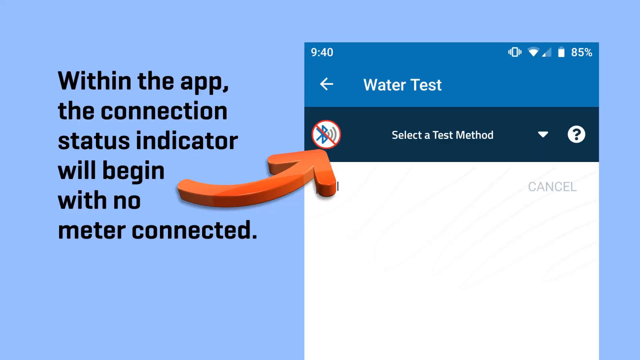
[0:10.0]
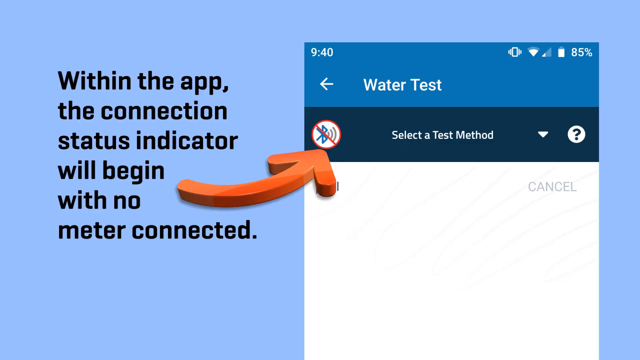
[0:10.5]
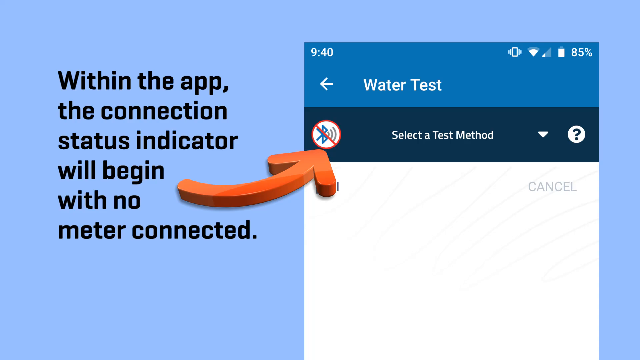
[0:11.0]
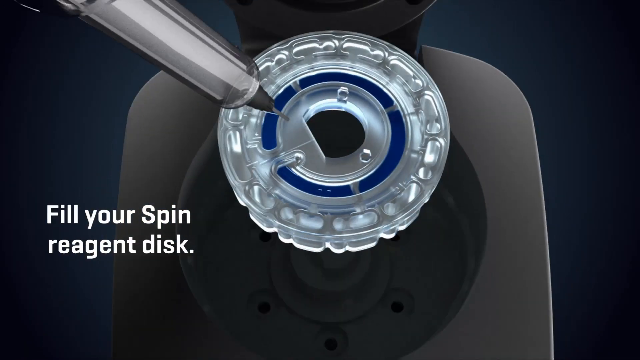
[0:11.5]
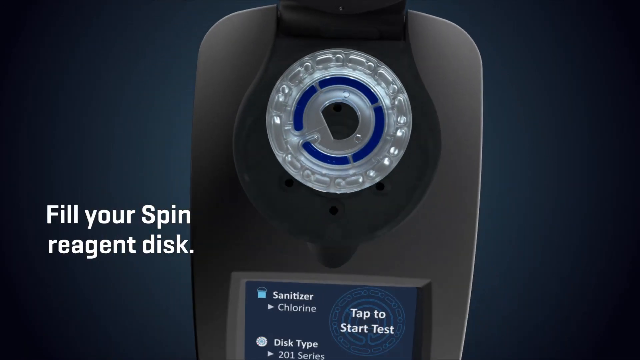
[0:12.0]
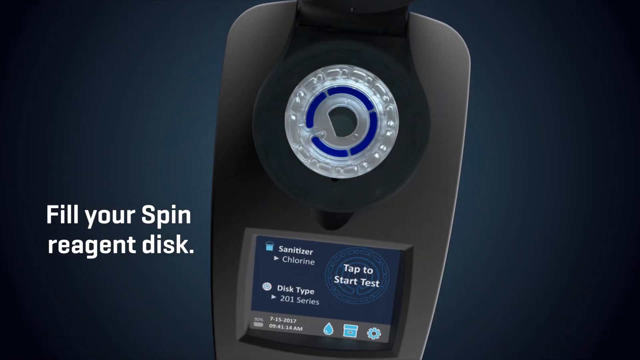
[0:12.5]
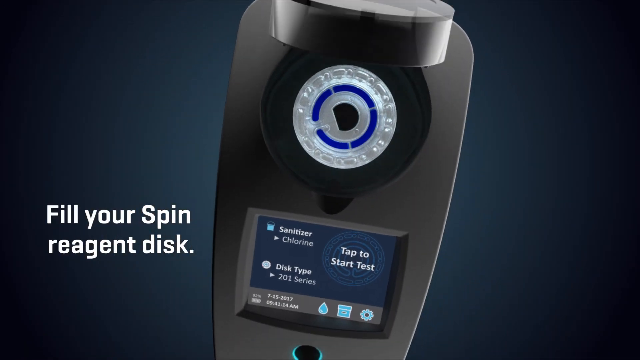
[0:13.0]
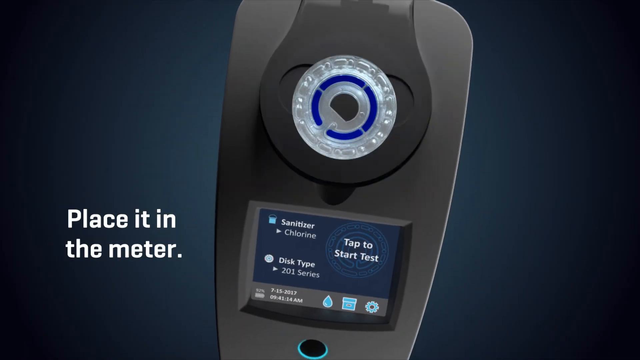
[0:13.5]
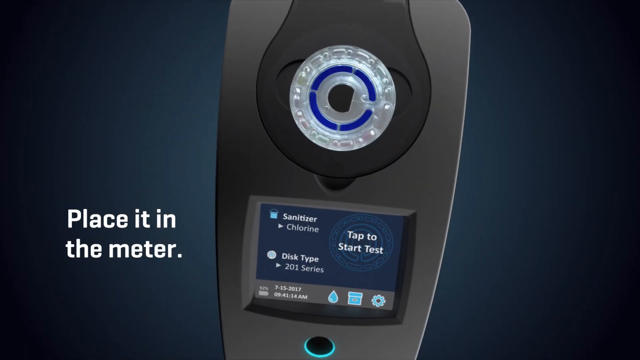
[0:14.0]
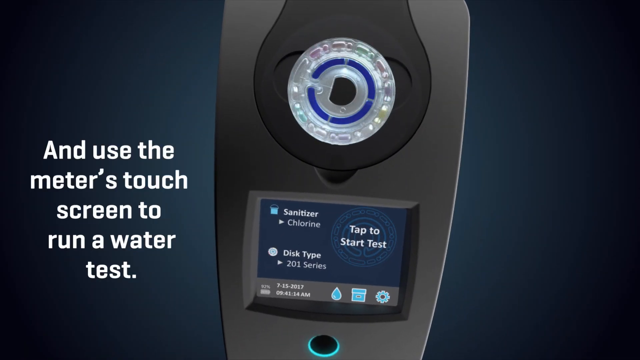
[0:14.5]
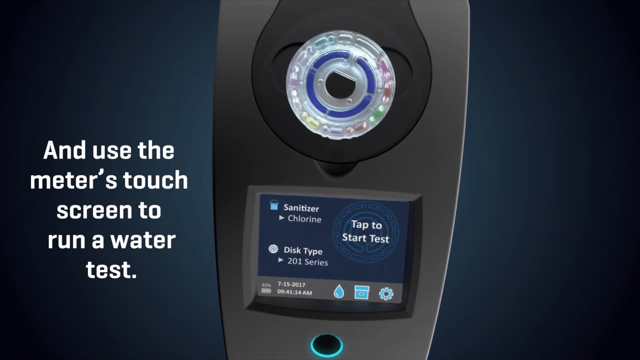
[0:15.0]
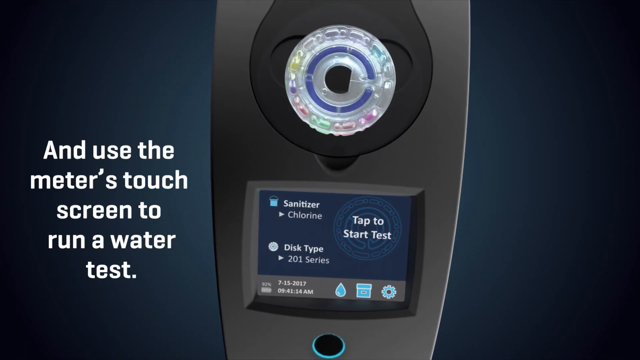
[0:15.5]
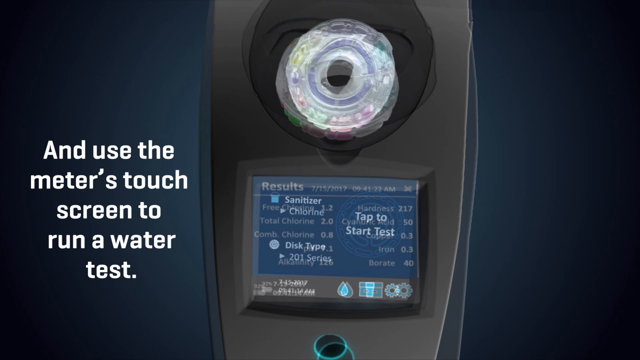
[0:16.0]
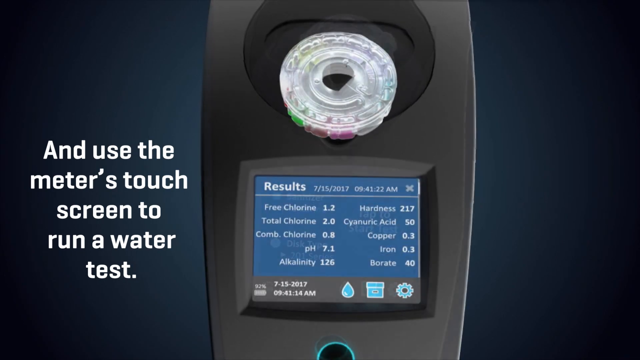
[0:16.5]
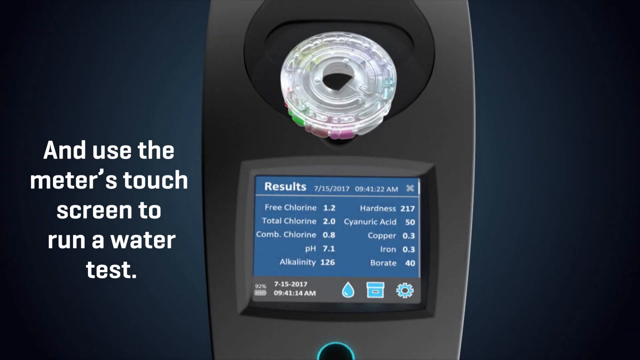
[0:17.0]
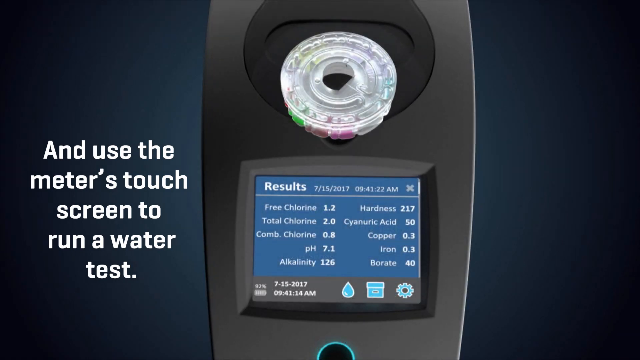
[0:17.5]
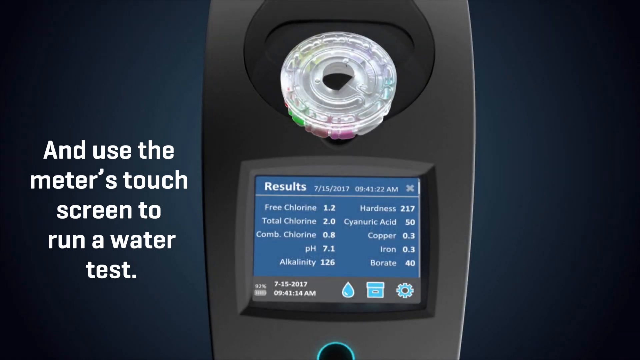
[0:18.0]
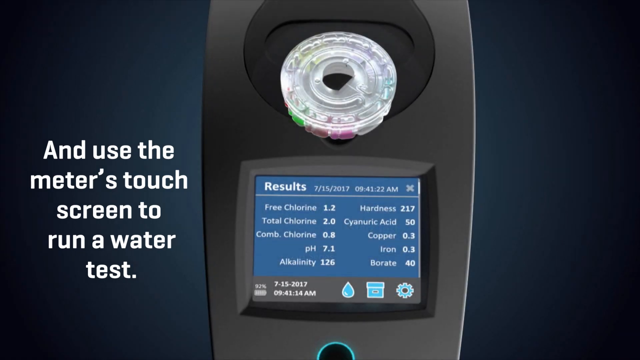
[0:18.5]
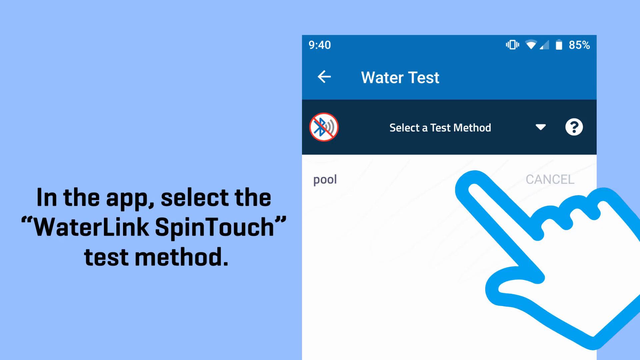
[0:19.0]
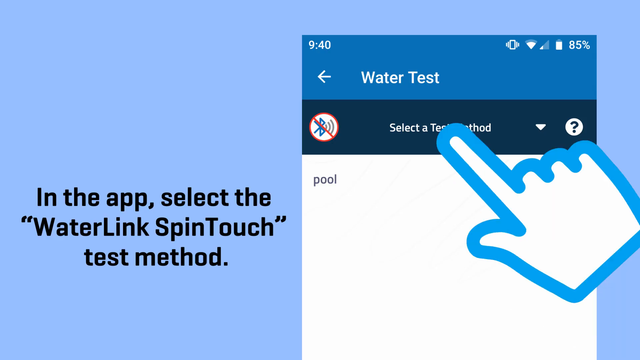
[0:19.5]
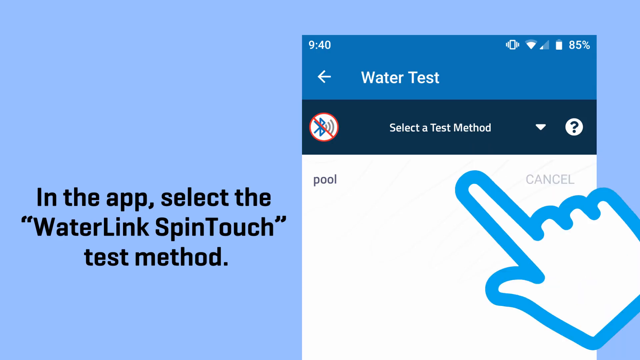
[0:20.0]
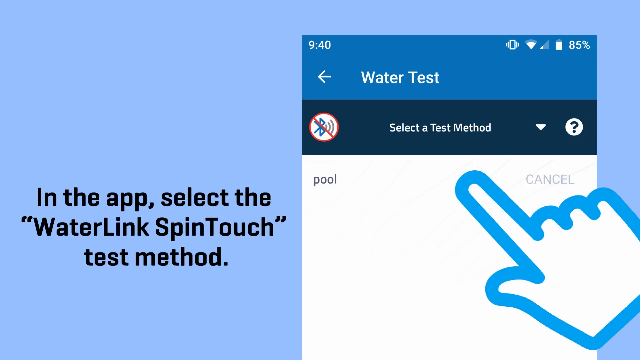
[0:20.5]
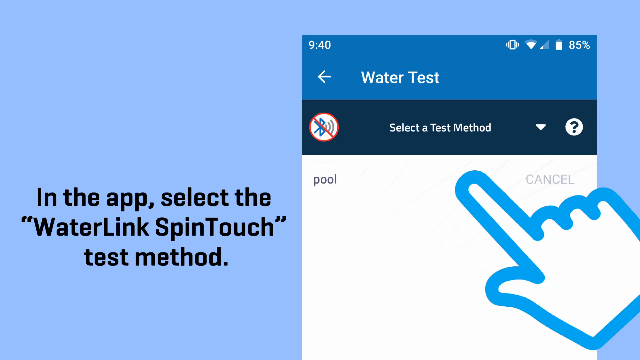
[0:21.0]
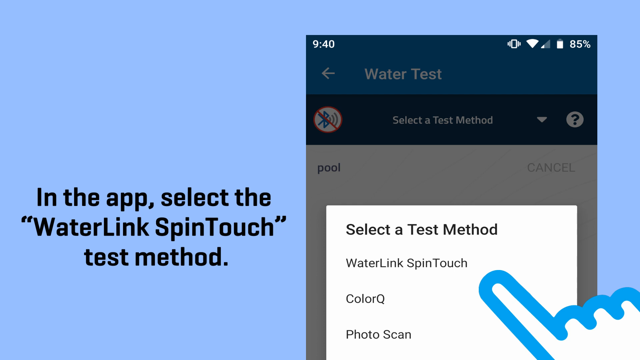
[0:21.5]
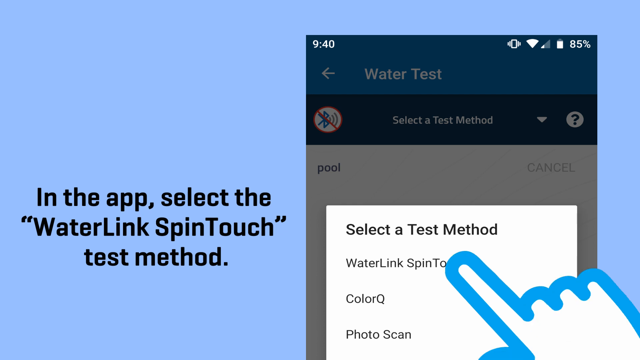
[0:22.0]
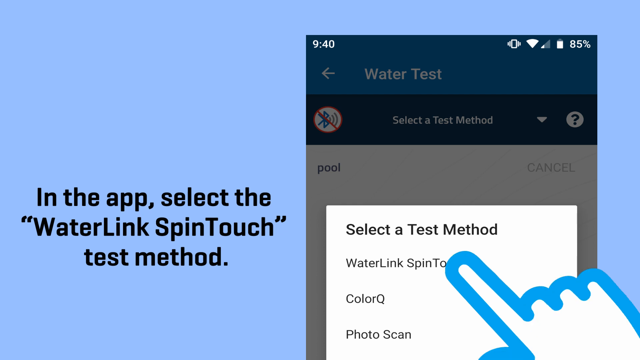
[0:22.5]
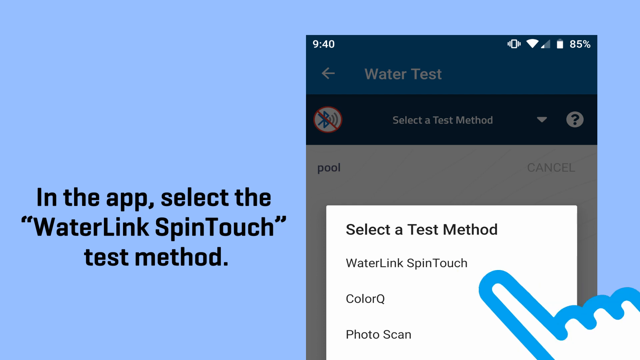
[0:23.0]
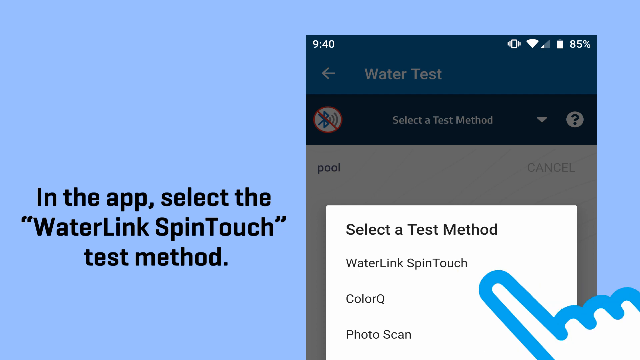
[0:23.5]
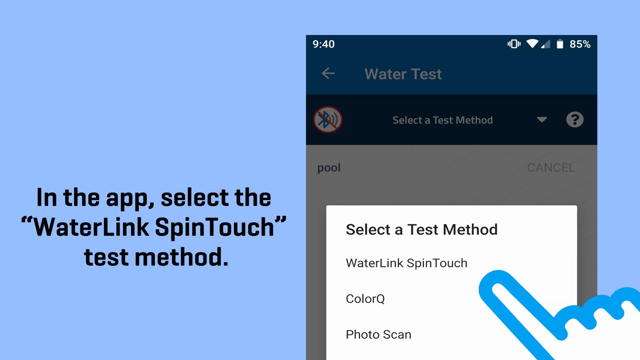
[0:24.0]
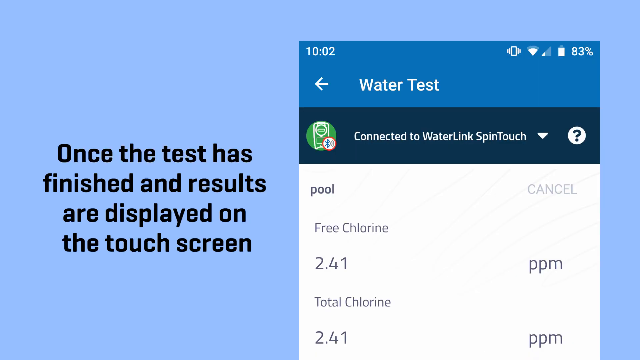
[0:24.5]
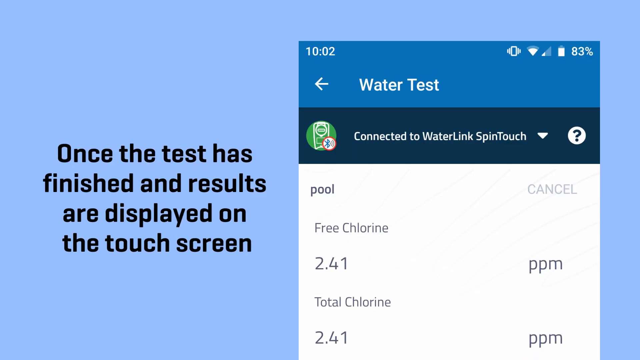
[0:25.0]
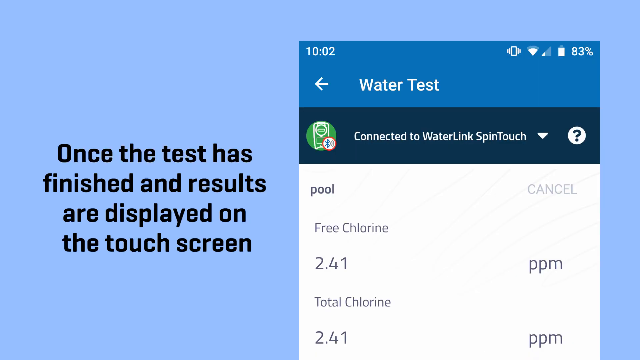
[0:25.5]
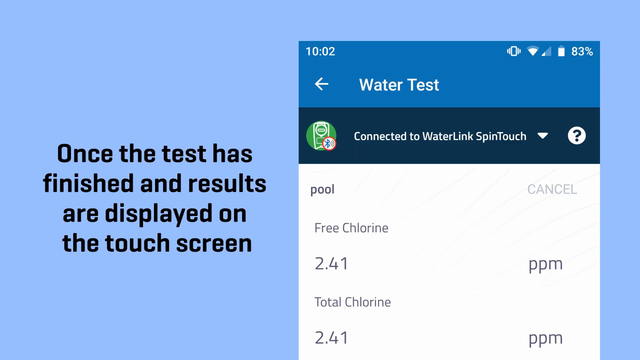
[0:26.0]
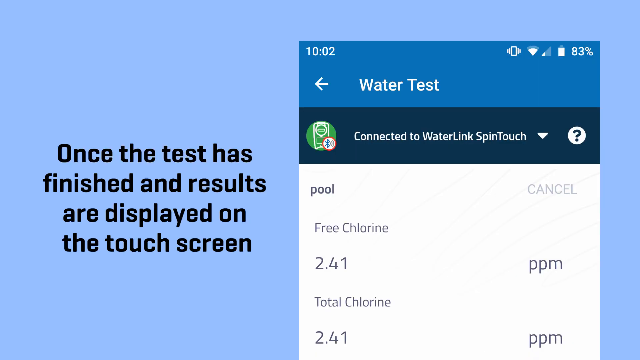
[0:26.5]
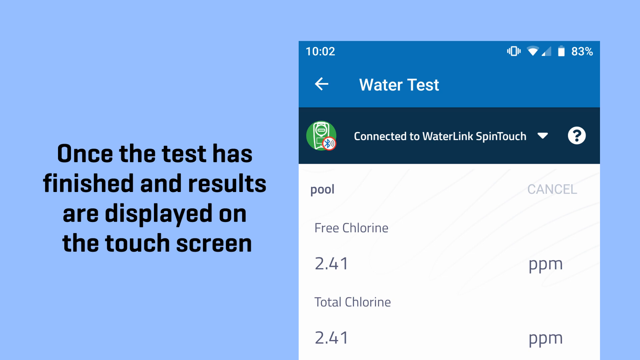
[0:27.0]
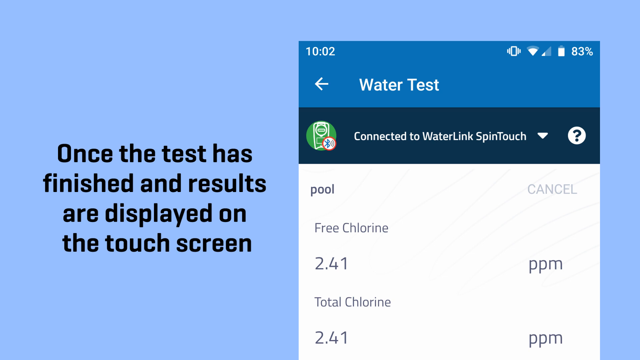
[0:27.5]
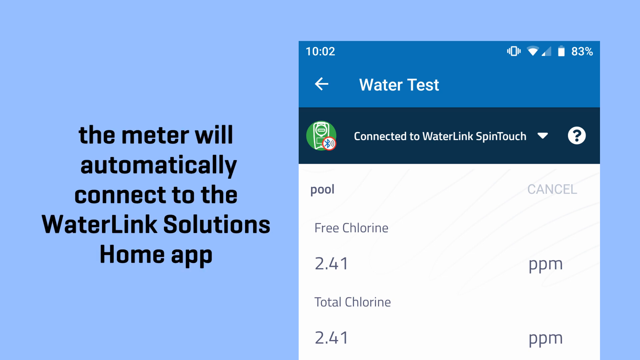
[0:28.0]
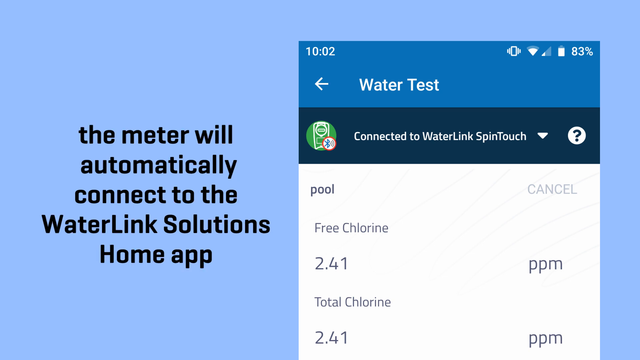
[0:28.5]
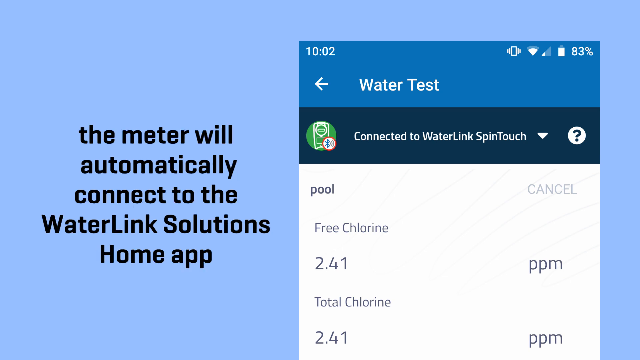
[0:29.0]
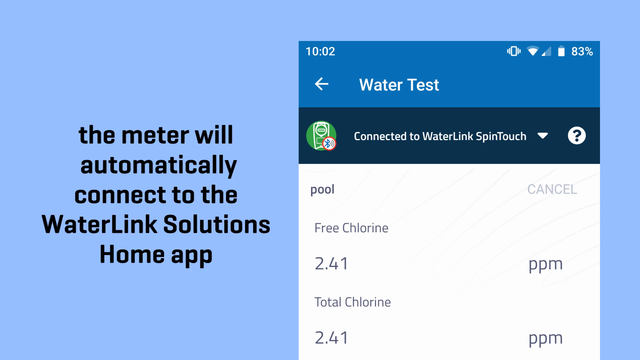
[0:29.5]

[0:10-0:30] A device is shown against a dark blue background with white text that reads "fill your spin reagent disc". The background is dark on the outside and gets lighter toward the middle. The device kind of looks like a modern mobile phone, or maybe a remote control. It has text in the middle and a white circle in the middle of it, and the white circle seems to be spinning. The text then reads "and use the meter's touch screen to run a water test". The video transitions to another page that says "in the app select the water link spin touch test method", then uses a screenshot of a mobile app to show how to do this, with a blue hand touching where to touch. It then shows how to select a test method. Text then says "once the test is finished and results are displayed on the touch screen", alongside a screenshot of a mobile phone showing what it will look like in use. The text continues: "the meter will automatically connect to the Water Link Solutions home app", again showing what the app will look like on a phone.